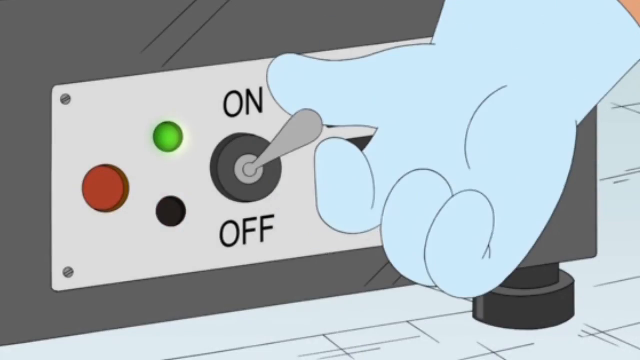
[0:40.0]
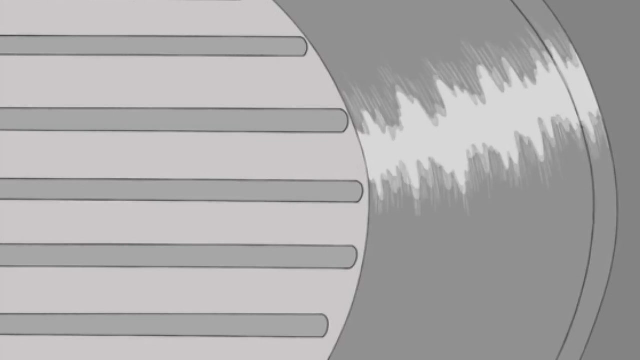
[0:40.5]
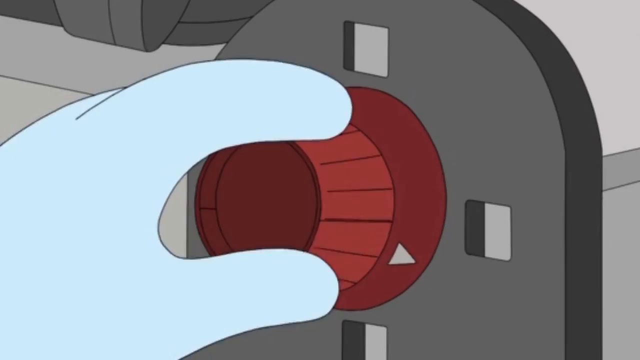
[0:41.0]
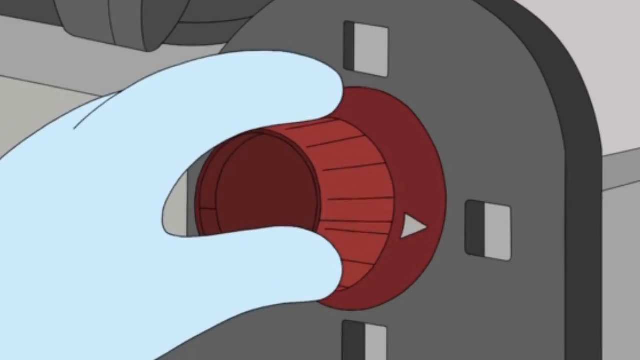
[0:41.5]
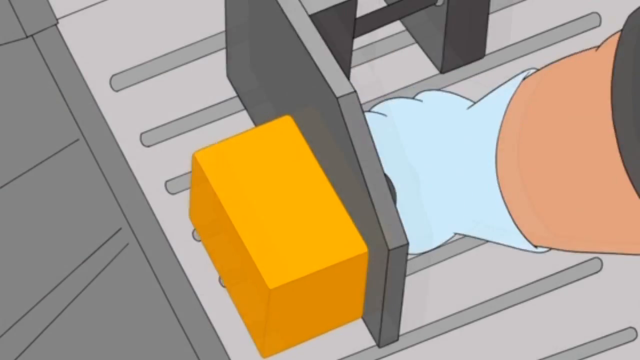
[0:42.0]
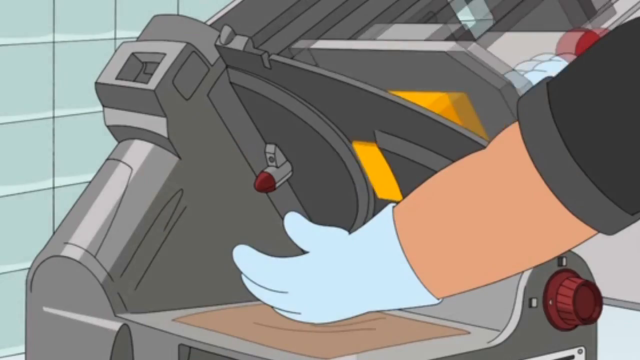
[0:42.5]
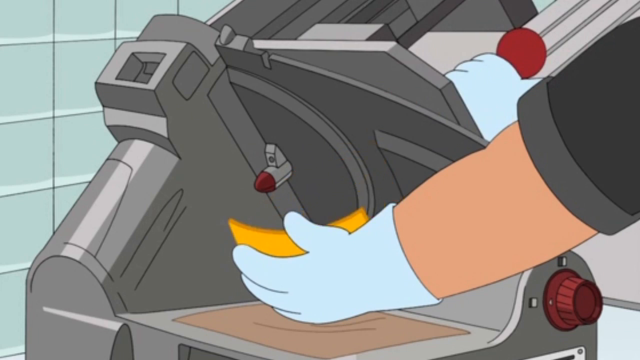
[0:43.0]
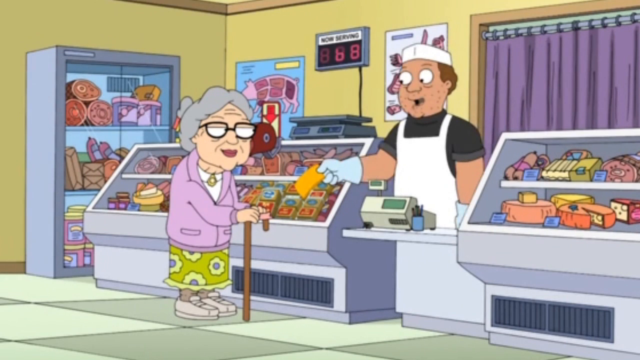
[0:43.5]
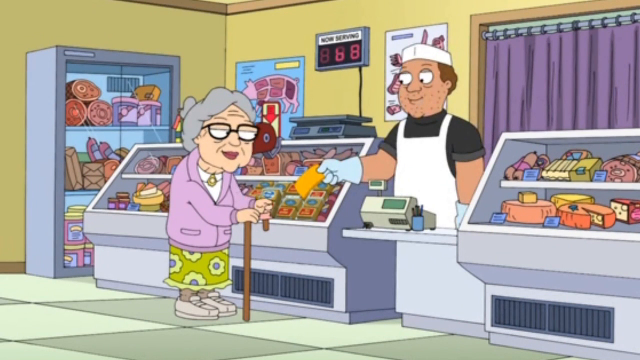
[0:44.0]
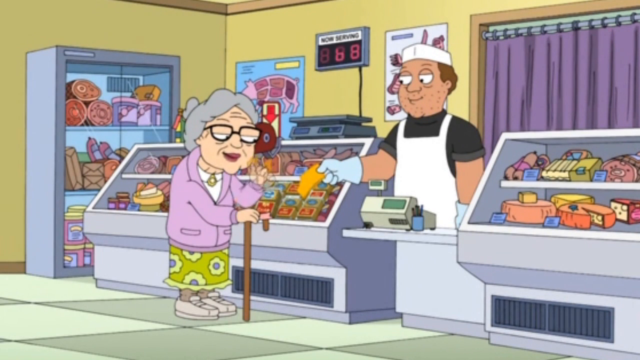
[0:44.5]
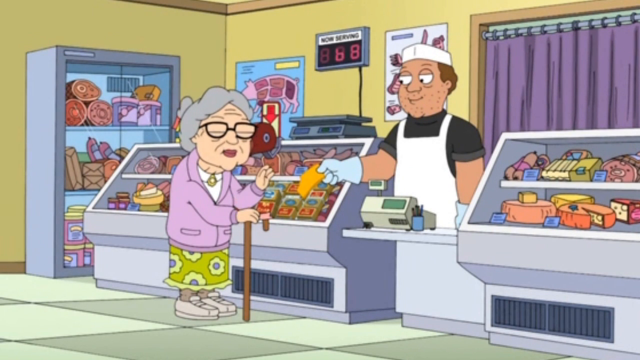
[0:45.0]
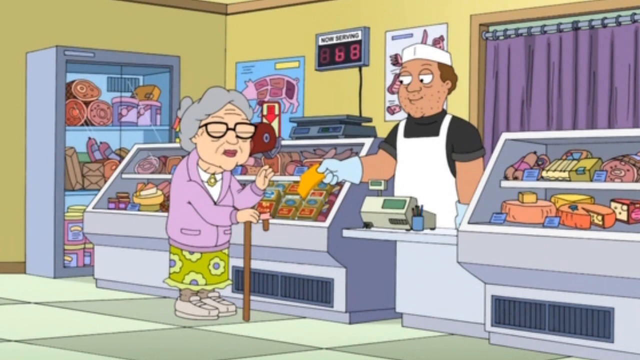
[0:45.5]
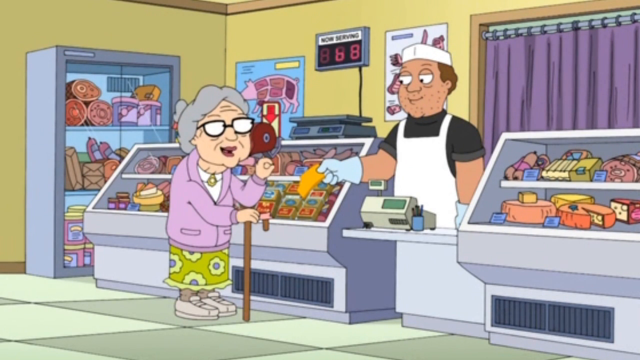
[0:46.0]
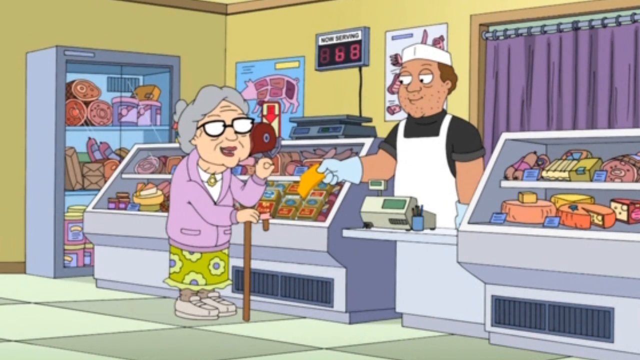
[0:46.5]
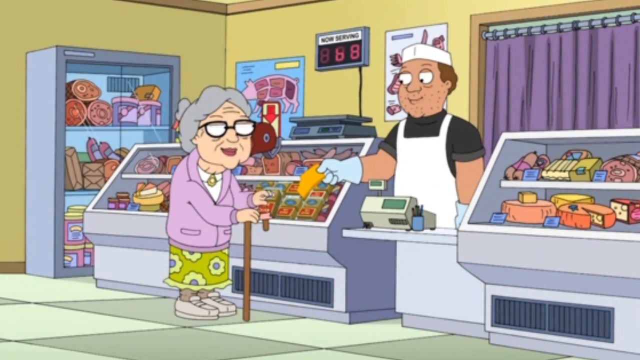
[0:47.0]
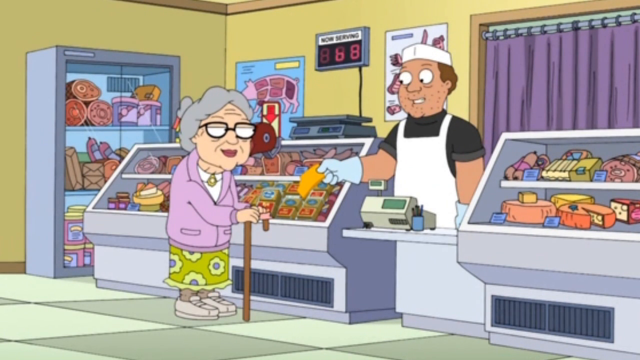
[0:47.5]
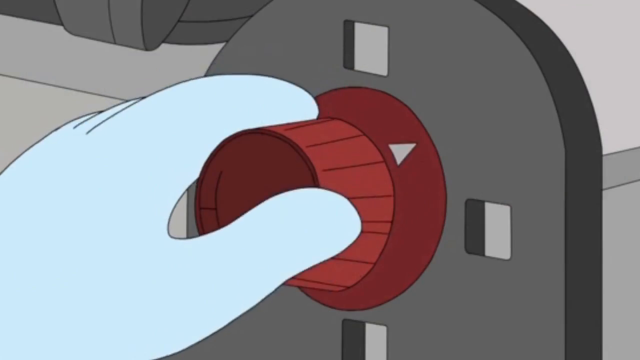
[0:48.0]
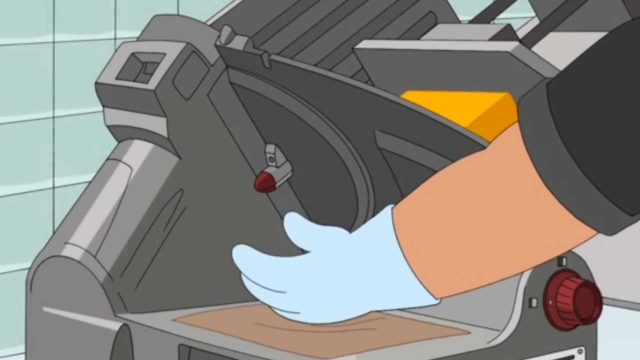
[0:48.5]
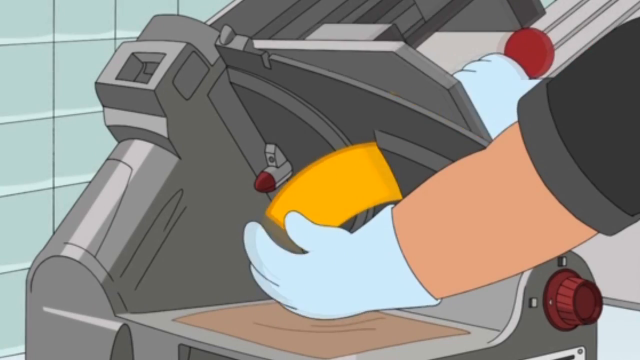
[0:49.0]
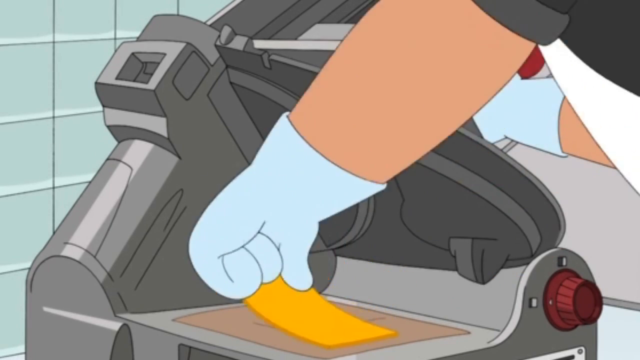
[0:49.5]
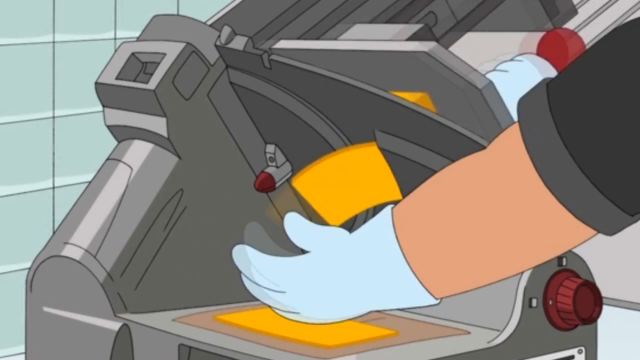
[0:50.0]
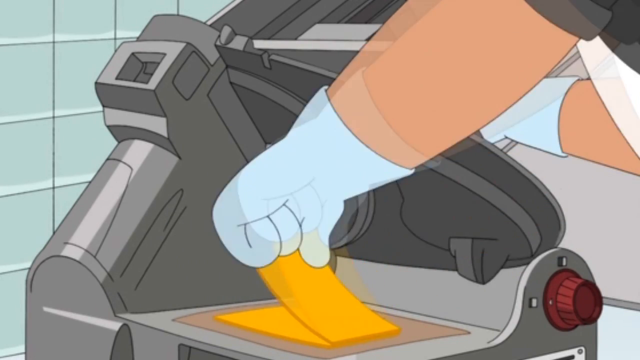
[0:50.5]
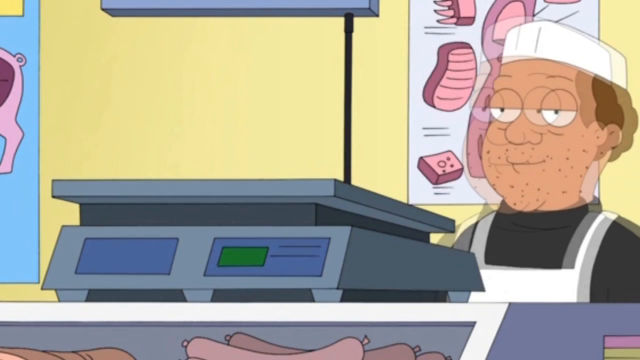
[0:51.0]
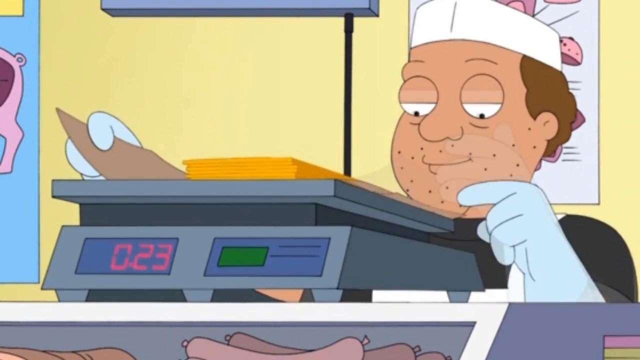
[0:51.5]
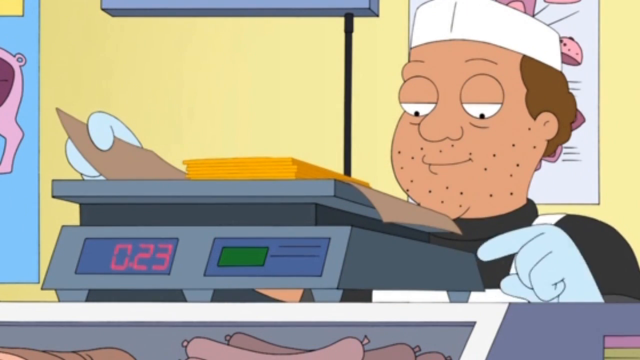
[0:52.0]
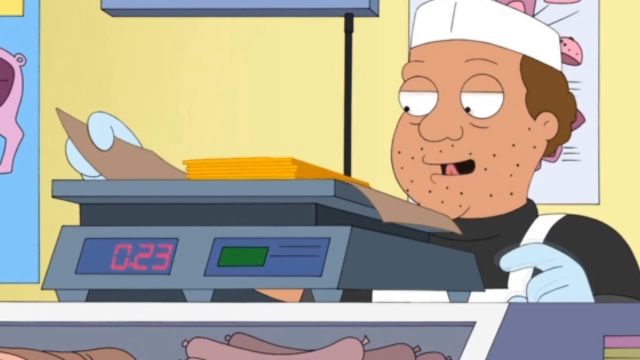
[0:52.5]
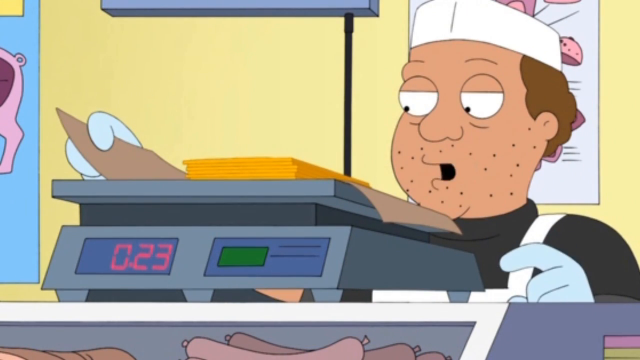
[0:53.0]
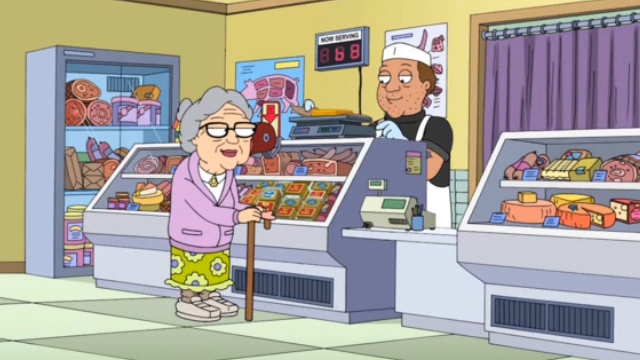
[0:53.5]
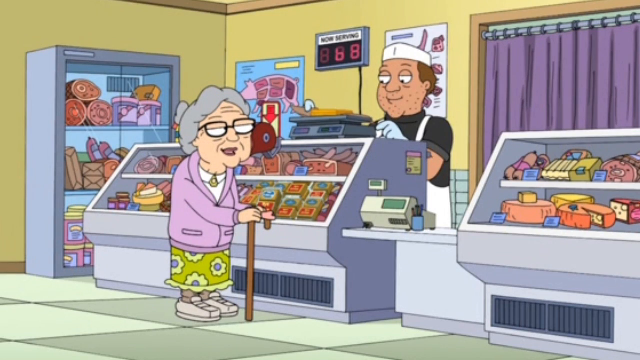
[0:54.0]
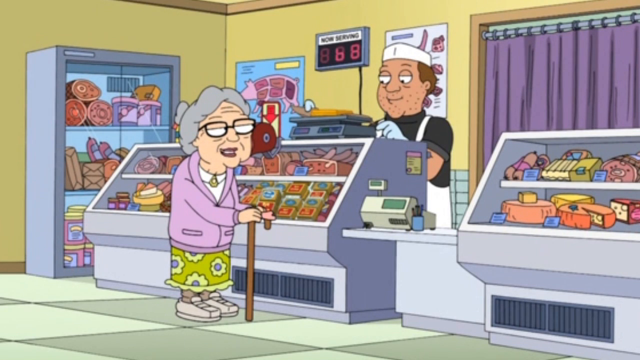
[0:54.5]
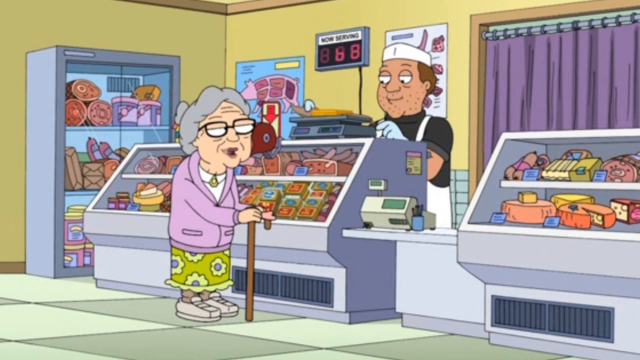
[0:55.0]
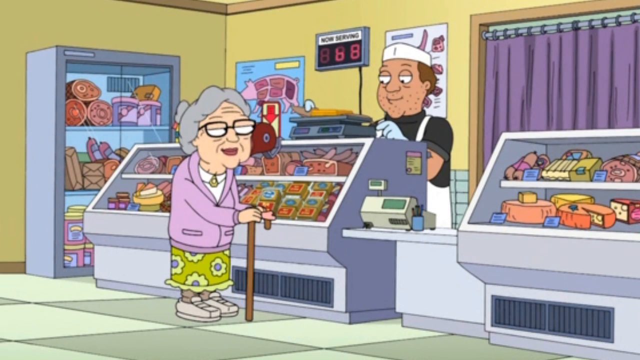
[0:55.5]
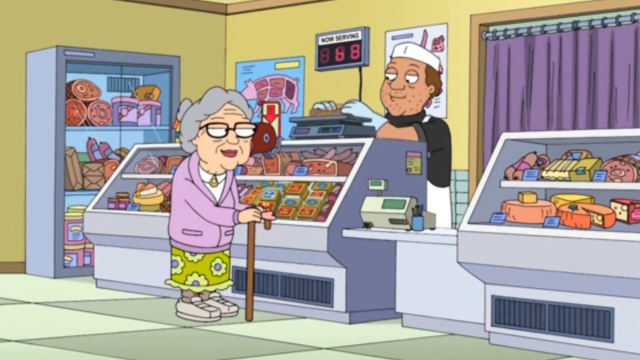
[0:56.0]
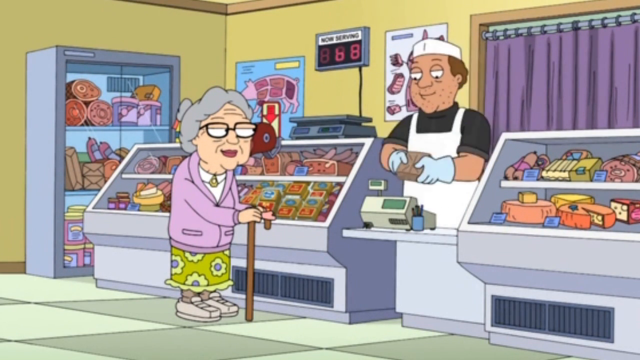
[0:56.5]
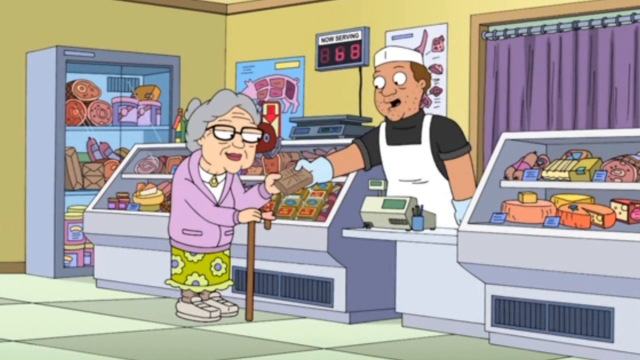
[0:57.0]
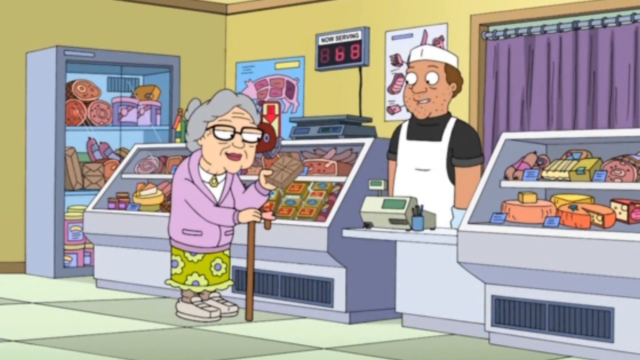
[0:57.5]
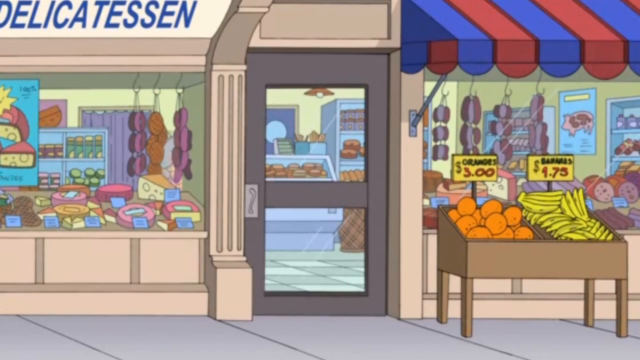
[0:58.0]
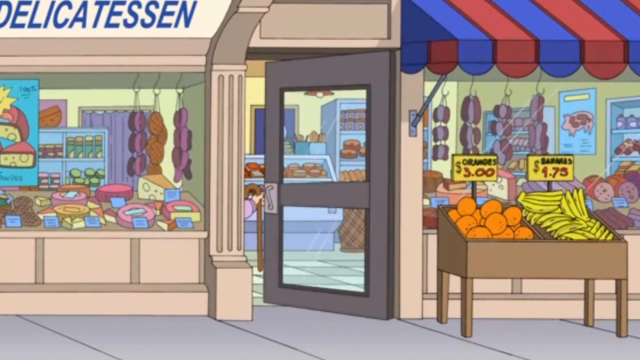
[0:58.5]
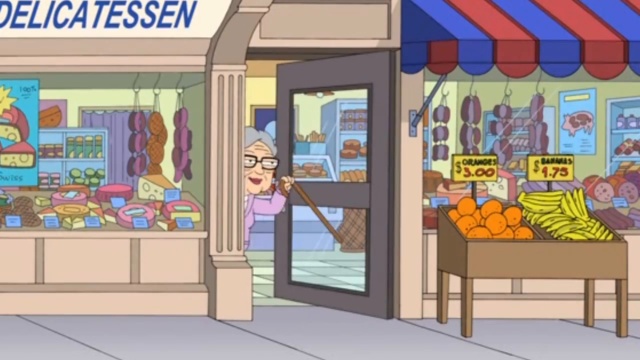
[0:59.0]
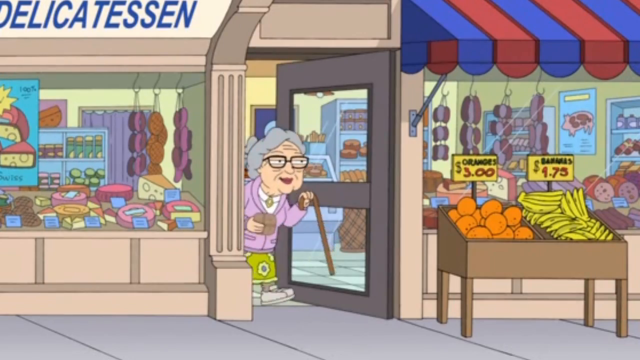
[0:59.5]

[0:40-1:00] The butcher turns on the deli slicer and dials it in, adjusting the thickness of the slices; the animation pays close attention to the slicer machine and how it works, zooming in on it. He slices a sample of the cheese for the lady and lets her try it, and she says it's good. He then cuts her several slices of cheese and puts them on the scale, which reads "0.23". He grabs the cheese off the scale, wraps up the package, and gives it to the lady. She takes it from him and starts walking out of the deli.